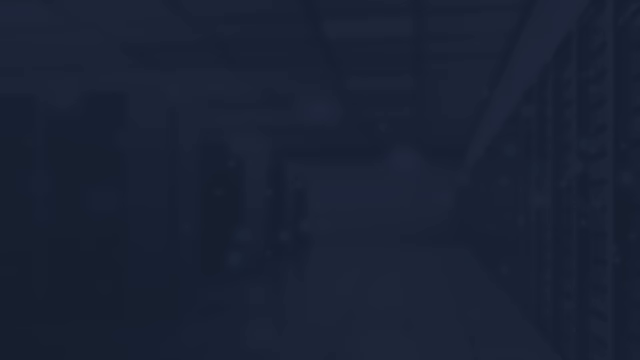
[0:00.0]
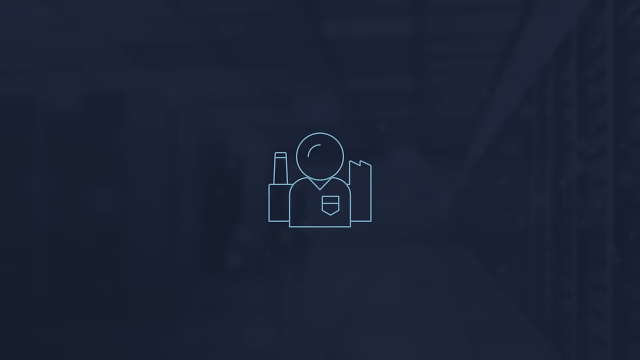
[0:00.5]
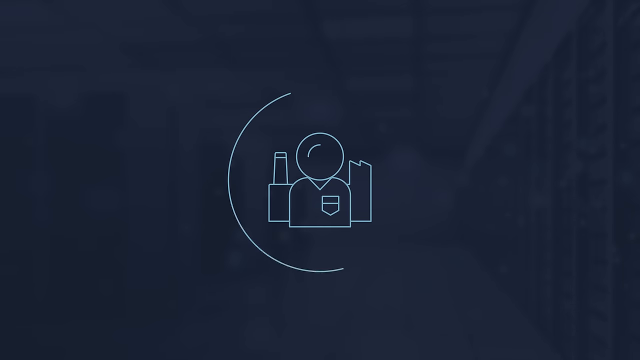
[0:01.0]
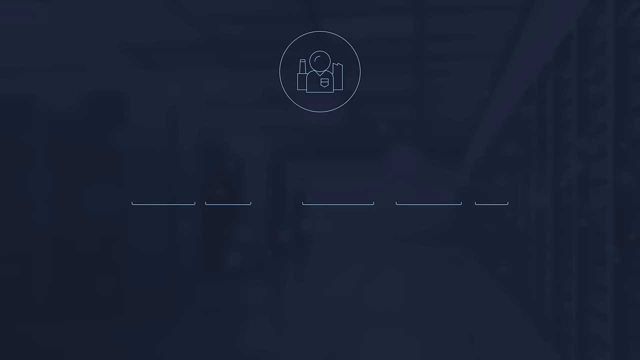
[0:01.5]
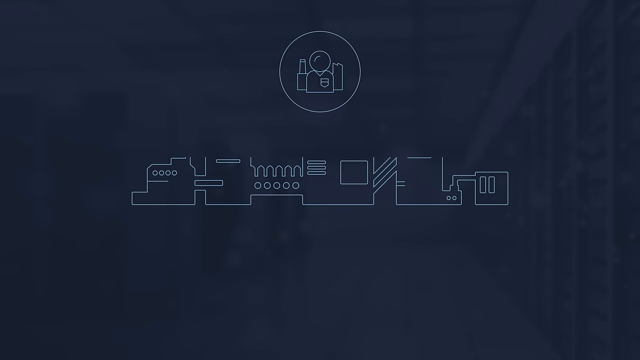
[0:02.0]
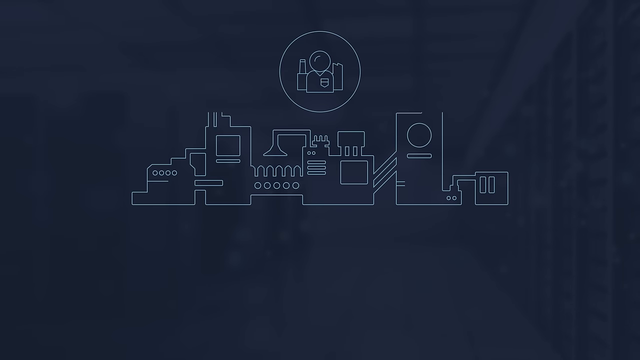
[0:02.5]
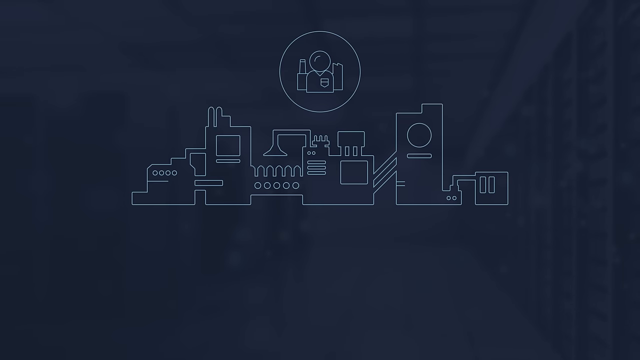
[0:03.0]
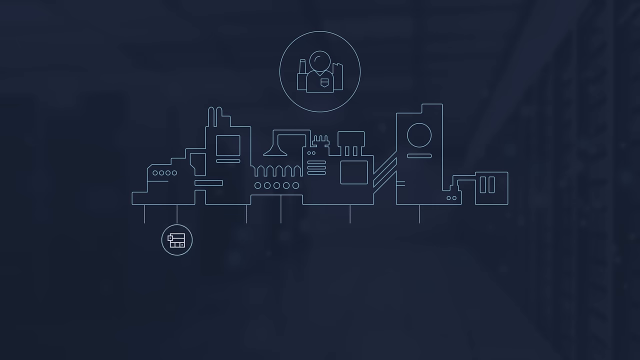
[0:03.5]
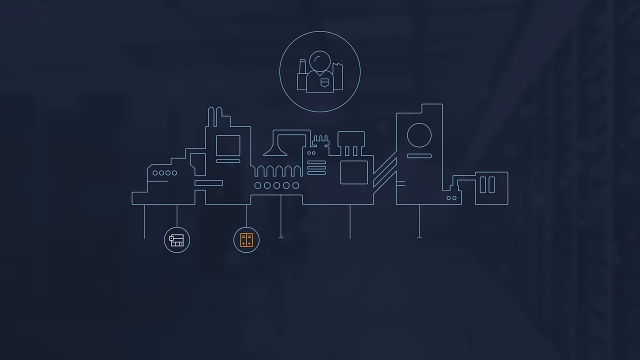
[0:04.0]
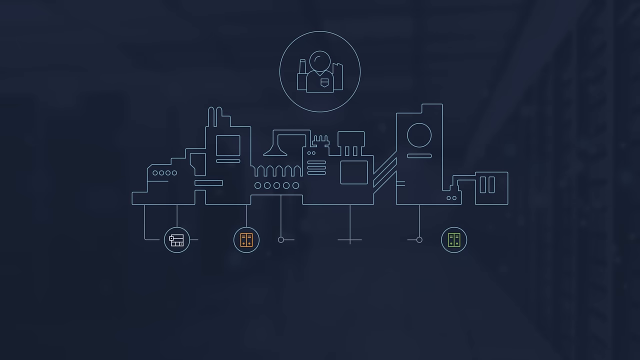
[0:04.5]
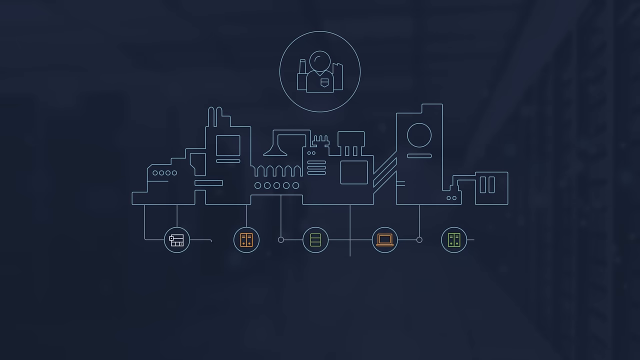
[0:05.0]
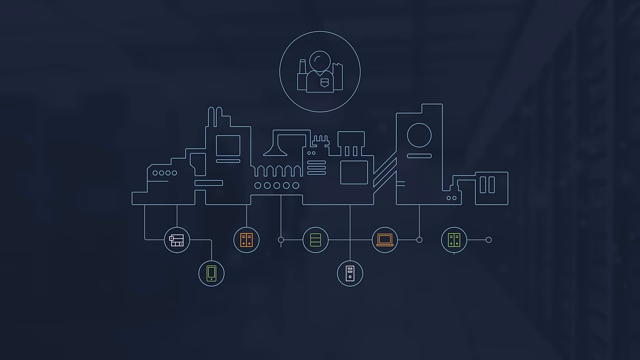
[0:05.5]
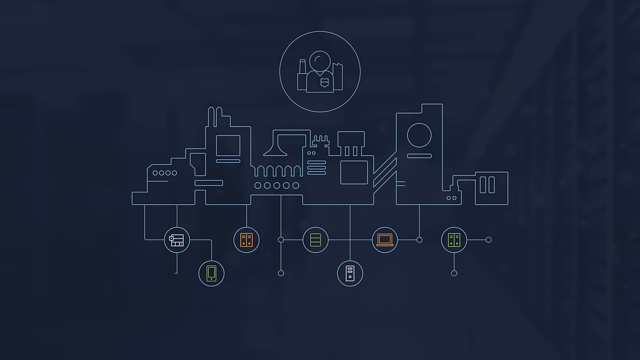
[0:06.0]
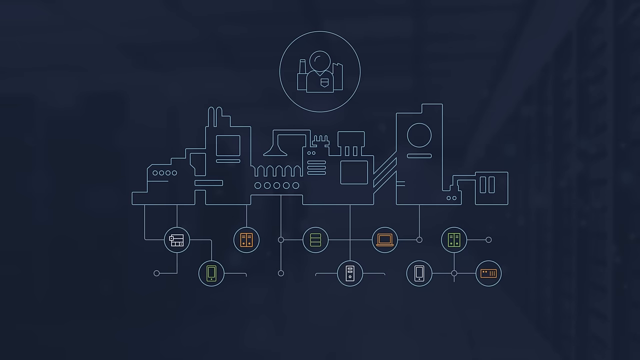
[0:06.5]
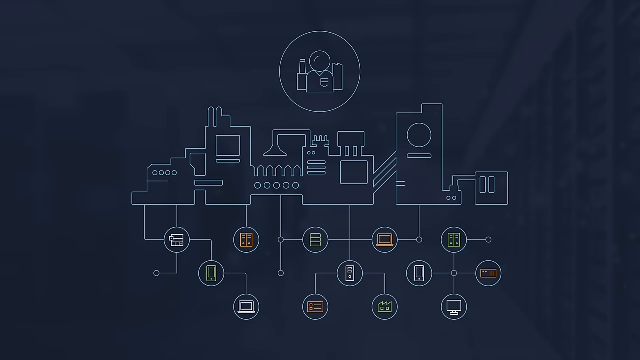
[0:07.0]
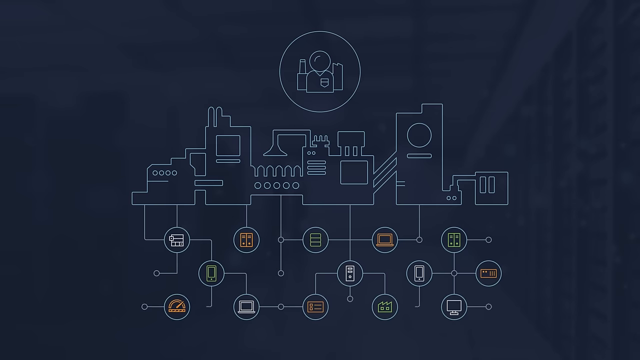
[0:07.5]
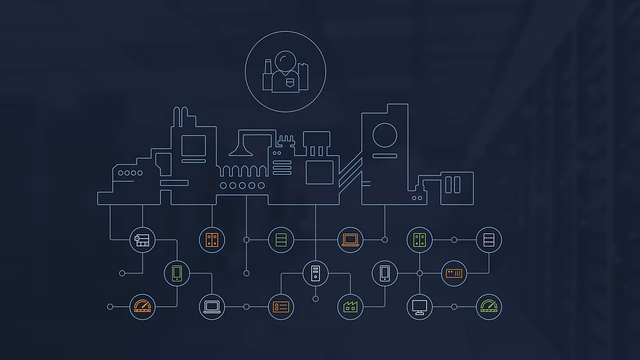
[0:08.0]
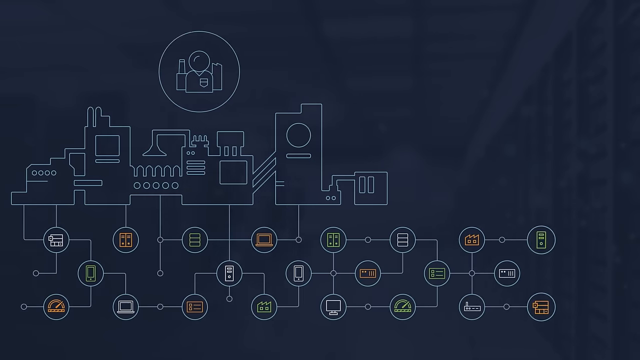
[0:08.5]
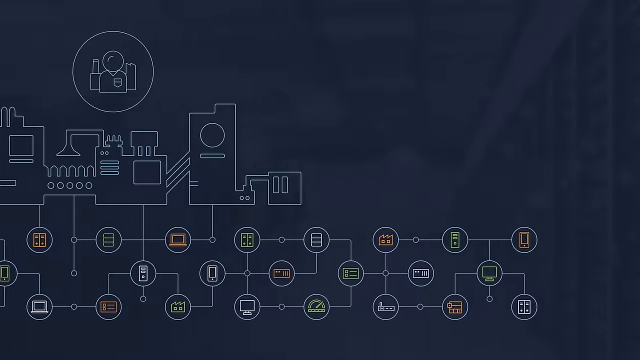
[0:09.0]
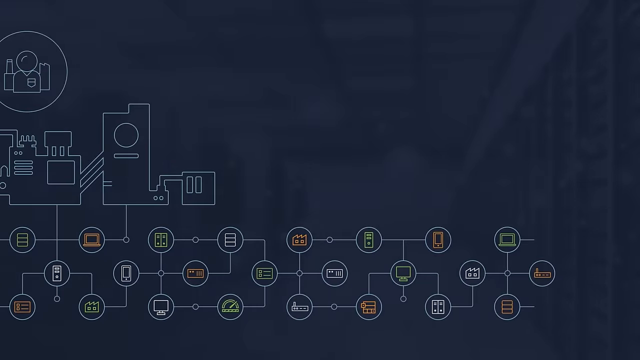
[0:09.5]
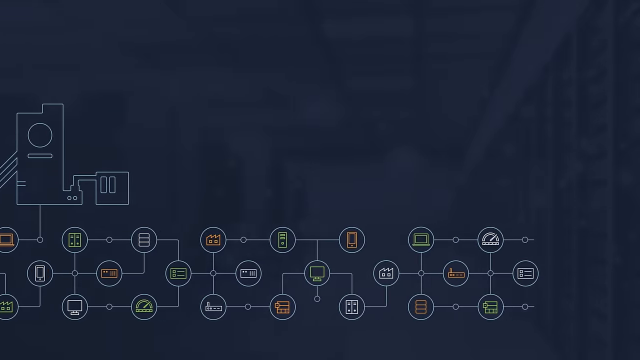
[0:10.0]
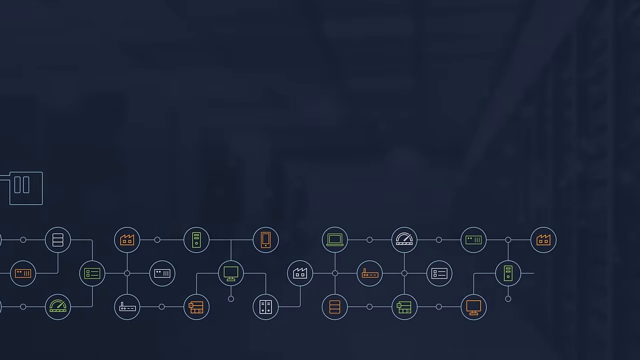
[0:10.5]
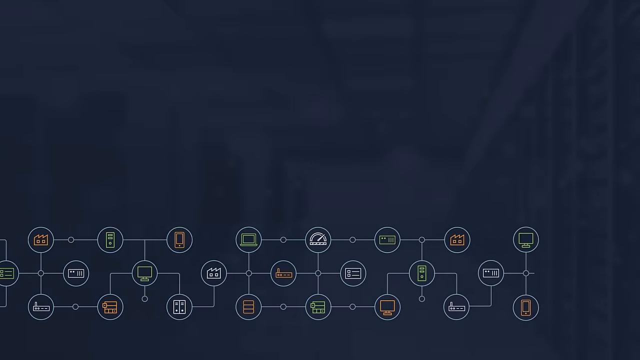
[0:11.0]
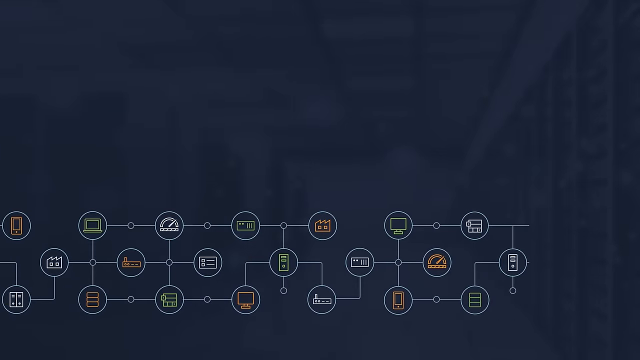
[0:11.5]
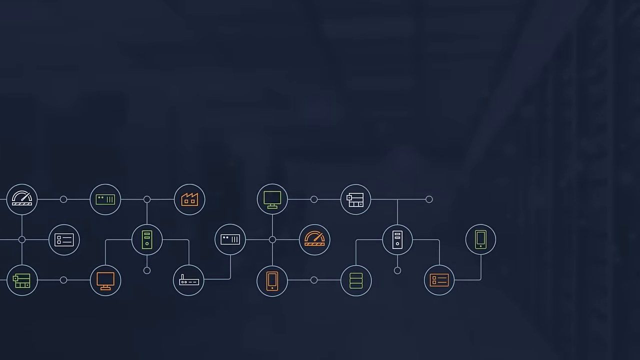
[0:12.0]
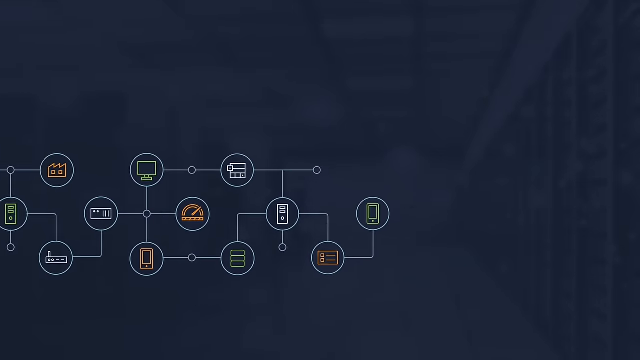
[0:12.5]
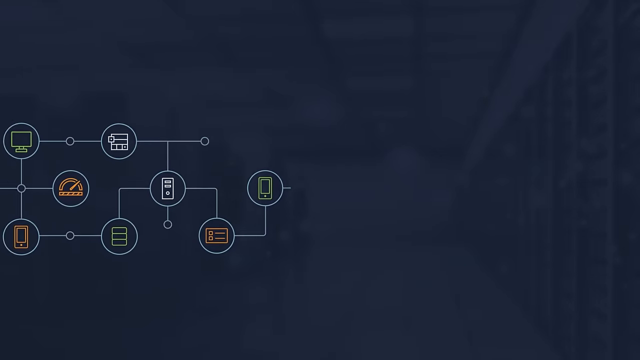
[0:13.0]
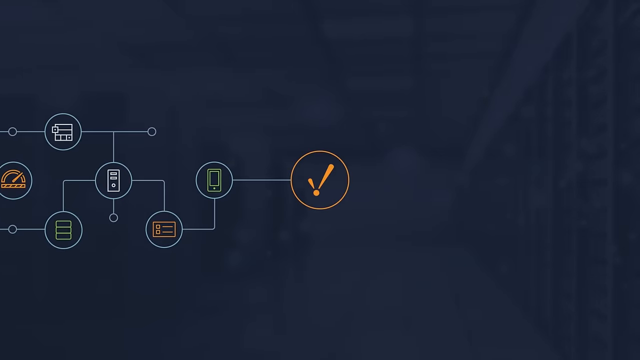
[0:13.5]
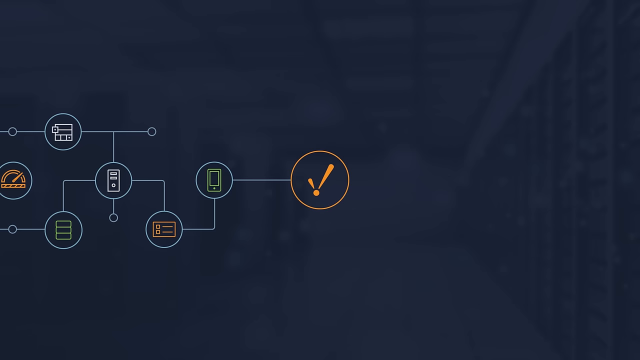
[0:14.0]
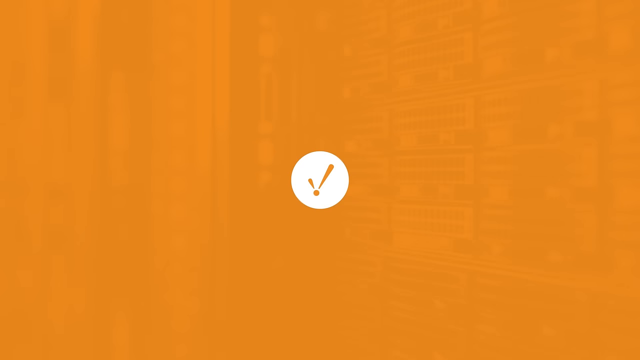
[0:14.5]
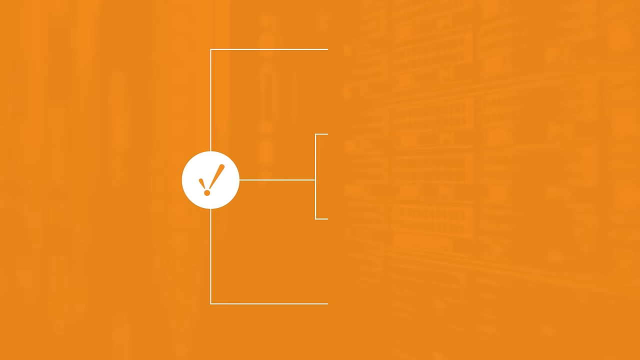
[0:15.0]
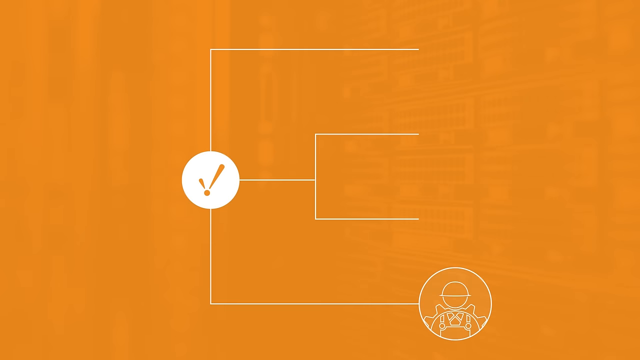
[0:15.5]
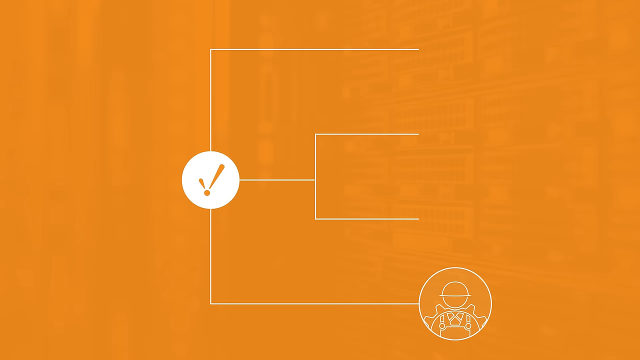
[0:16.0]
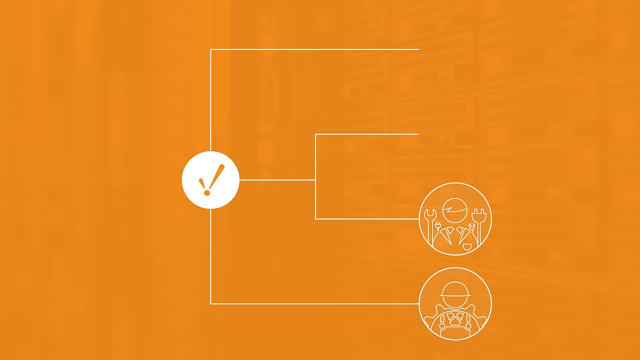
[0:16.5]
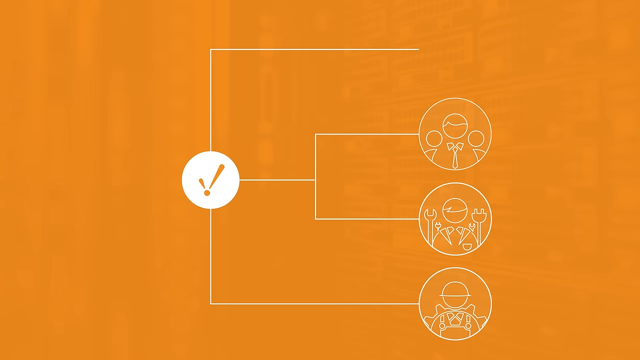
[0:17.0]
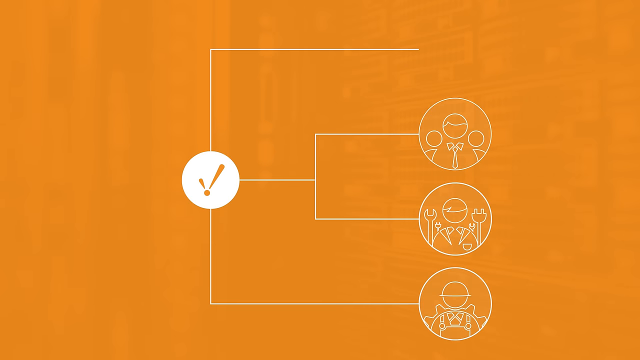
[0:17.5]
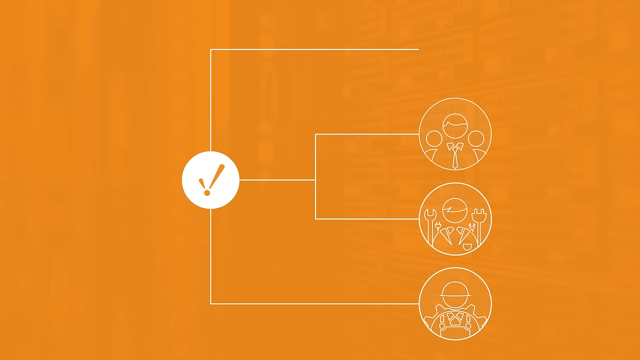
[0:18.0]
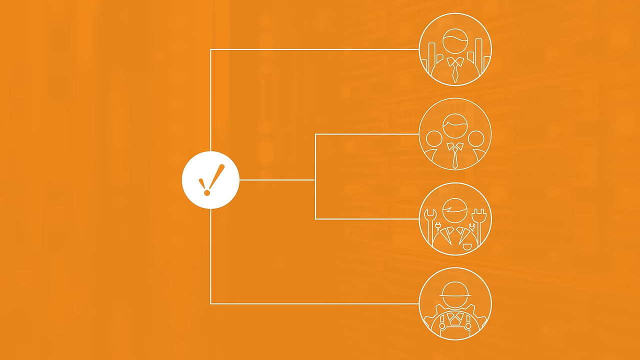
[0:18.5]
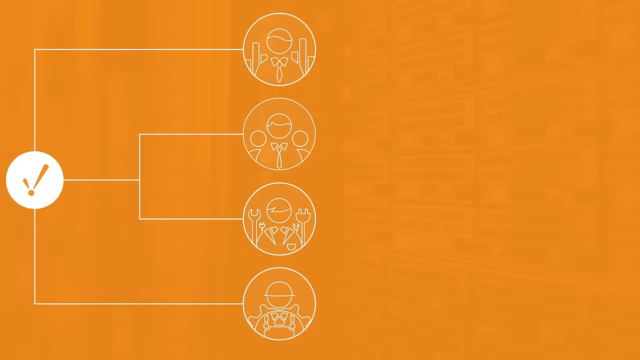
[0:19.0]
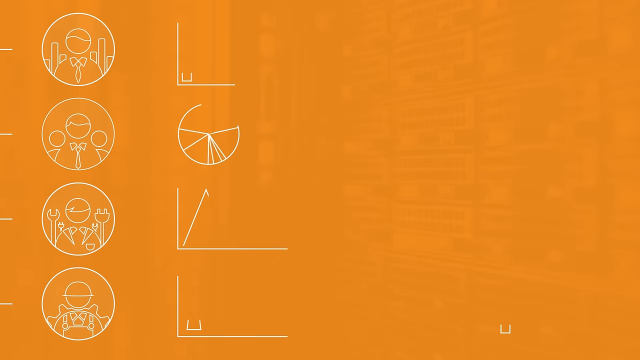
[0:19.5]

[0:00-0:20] The video opens on a black screen with gray and orange designs that are relatively hard to see. It then moves to an orange screen where the designs are much clearer, shown in white against the orange. There are images of people, then what looks like a scientific table, followed by icons of different scientific tools. On the orange screen there appears to be a check mark, and then what looks to be a hierarchy symbol branches out to four different people doing four different types of tasks. This leads into more brackets.